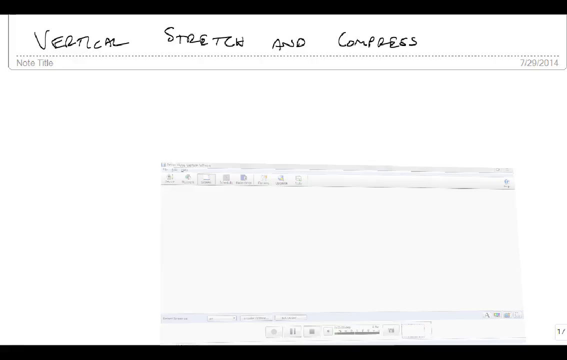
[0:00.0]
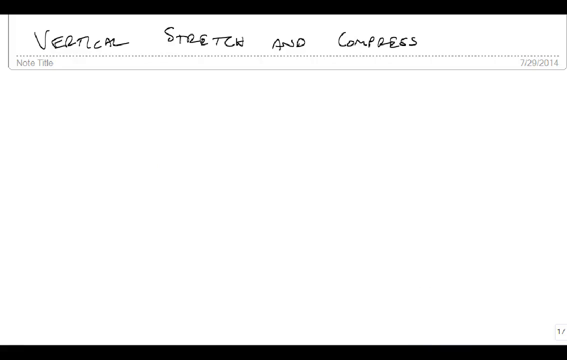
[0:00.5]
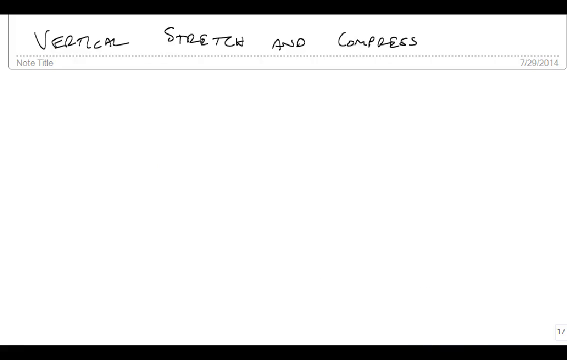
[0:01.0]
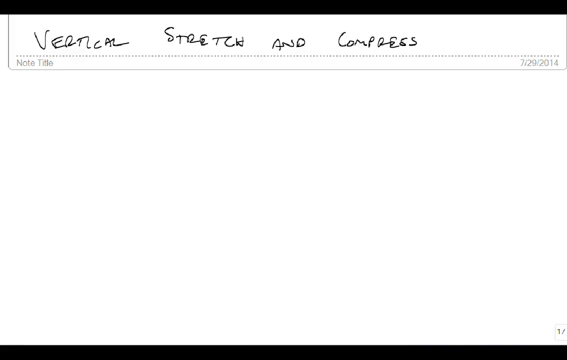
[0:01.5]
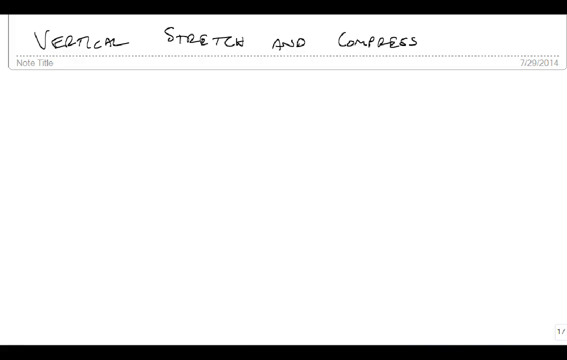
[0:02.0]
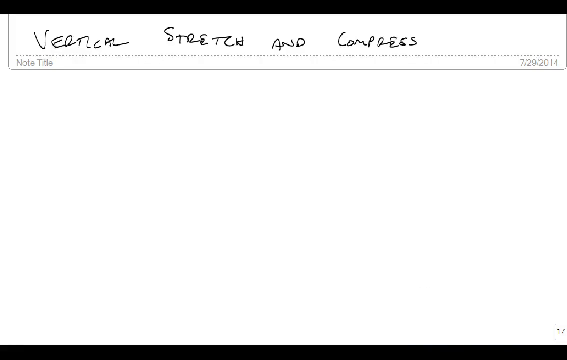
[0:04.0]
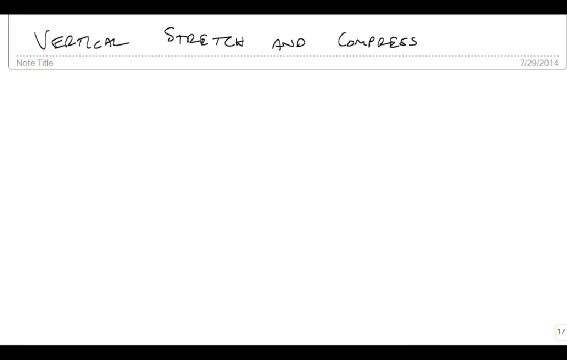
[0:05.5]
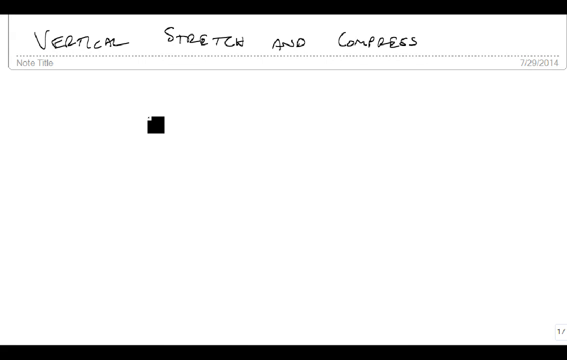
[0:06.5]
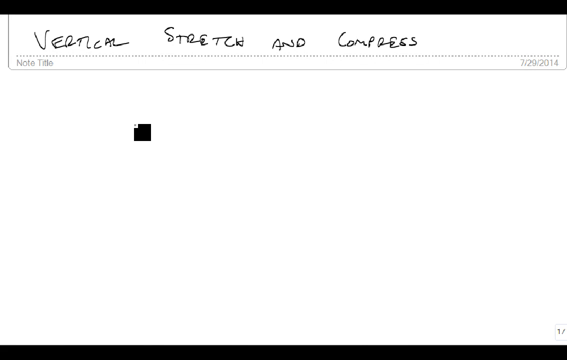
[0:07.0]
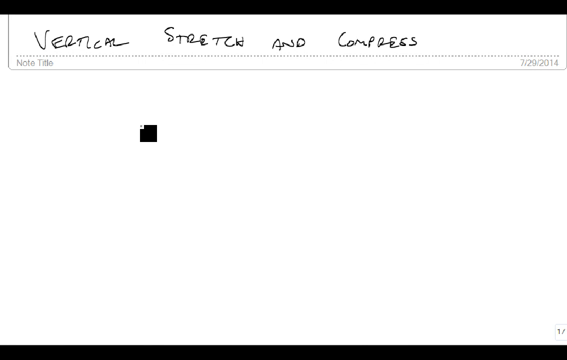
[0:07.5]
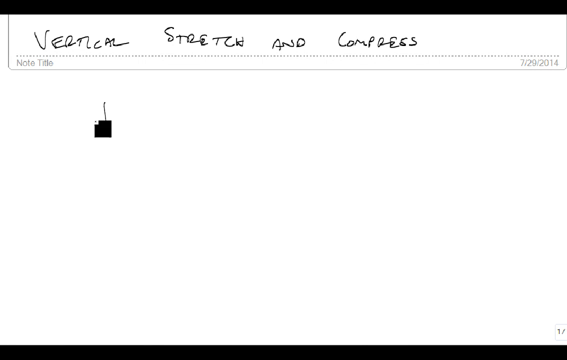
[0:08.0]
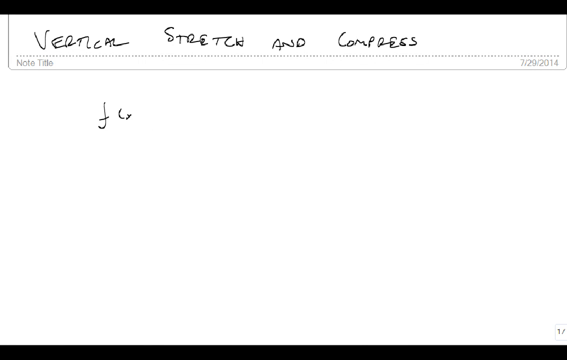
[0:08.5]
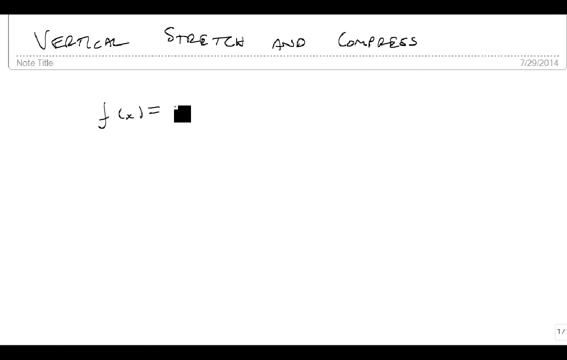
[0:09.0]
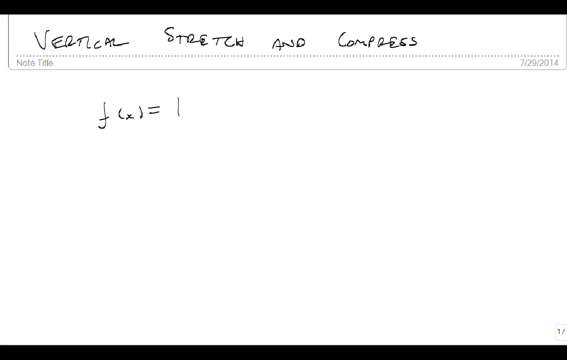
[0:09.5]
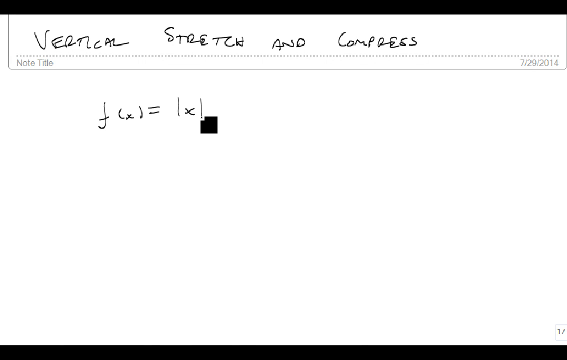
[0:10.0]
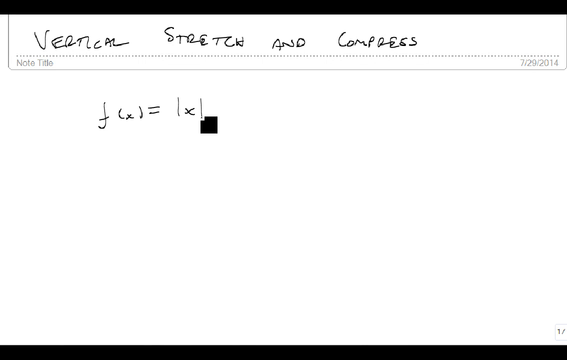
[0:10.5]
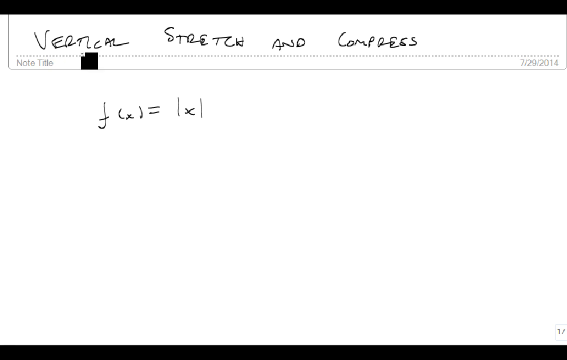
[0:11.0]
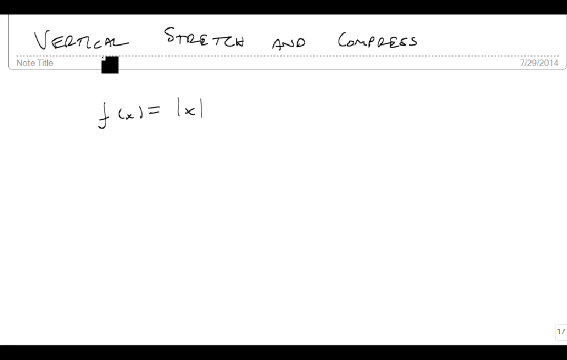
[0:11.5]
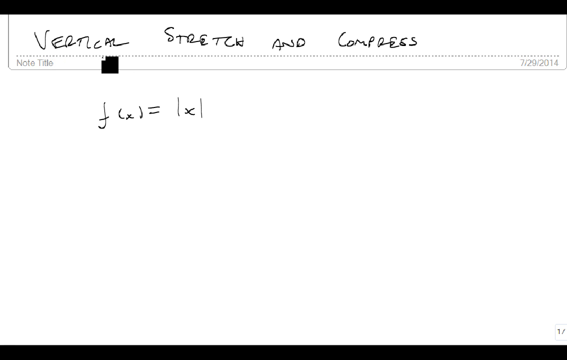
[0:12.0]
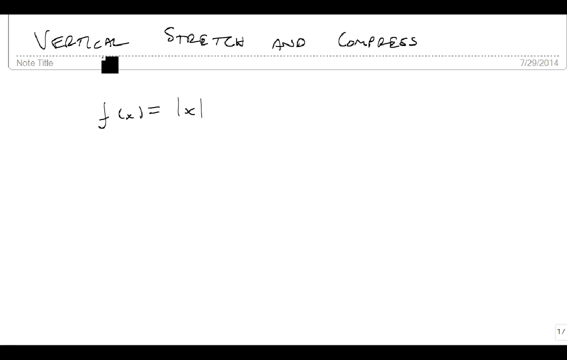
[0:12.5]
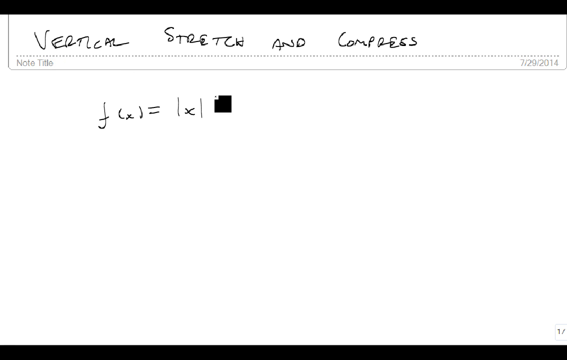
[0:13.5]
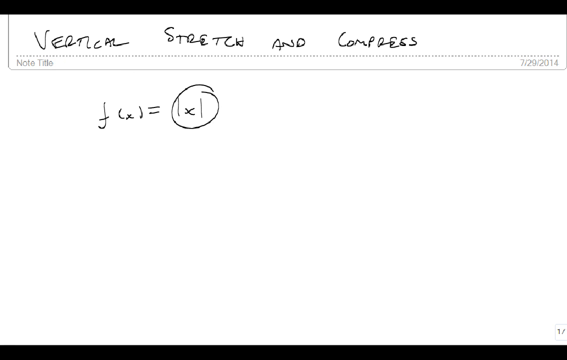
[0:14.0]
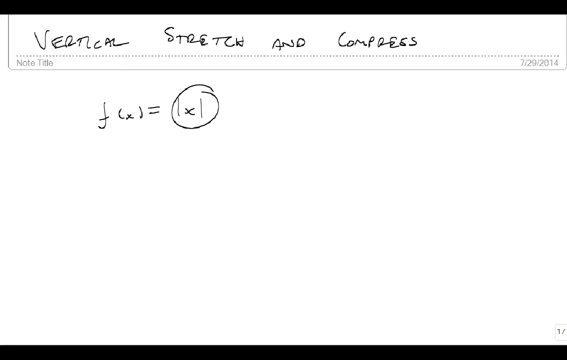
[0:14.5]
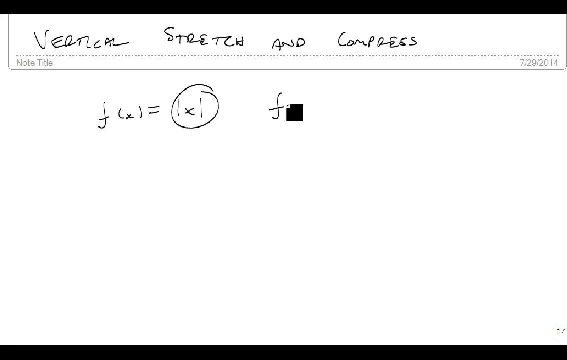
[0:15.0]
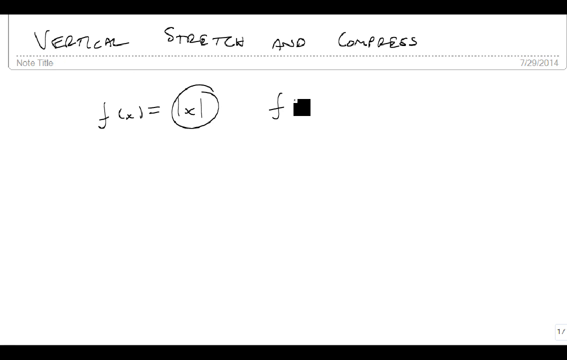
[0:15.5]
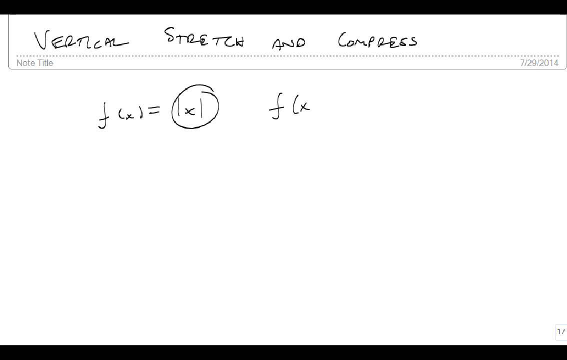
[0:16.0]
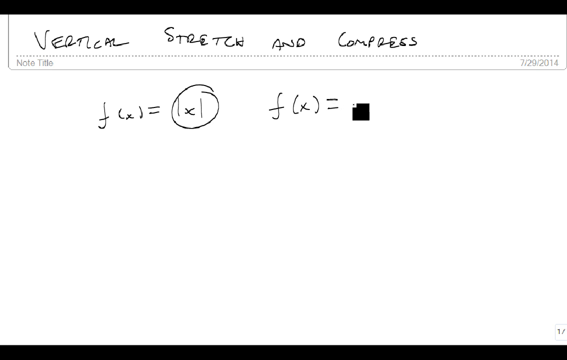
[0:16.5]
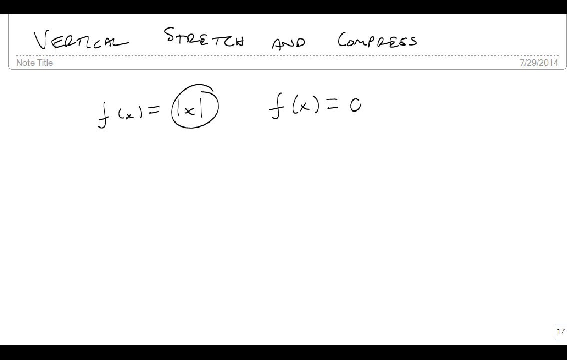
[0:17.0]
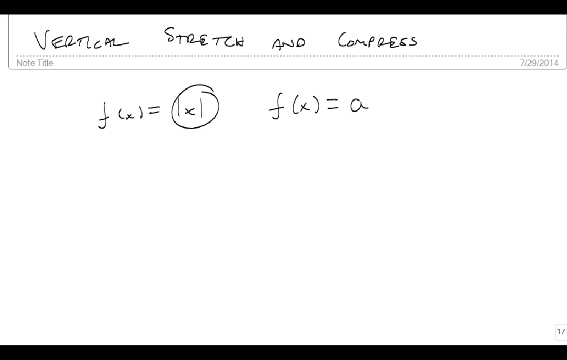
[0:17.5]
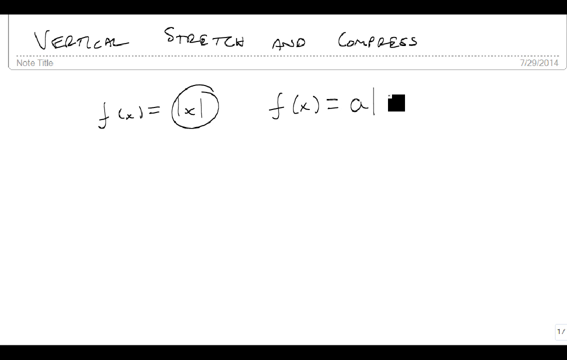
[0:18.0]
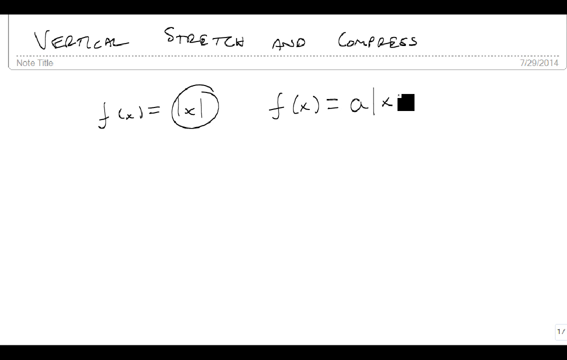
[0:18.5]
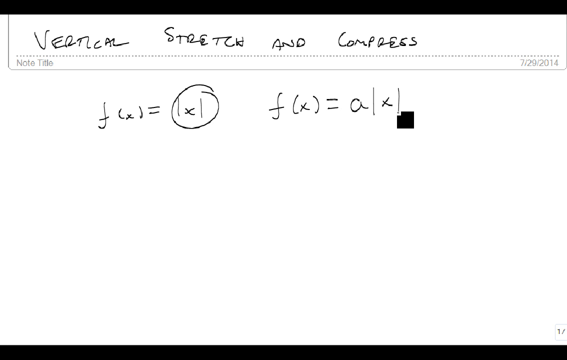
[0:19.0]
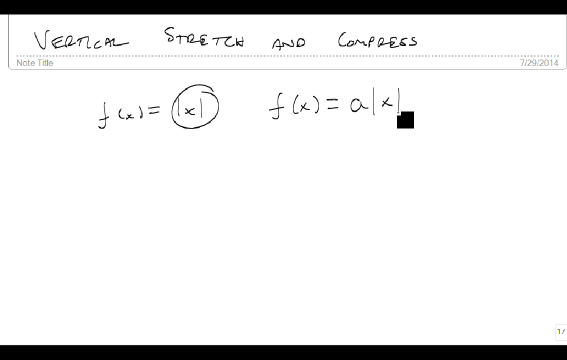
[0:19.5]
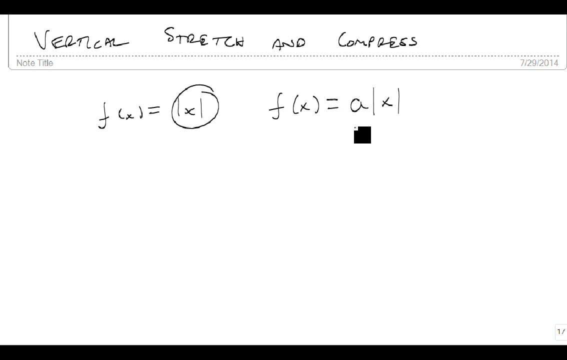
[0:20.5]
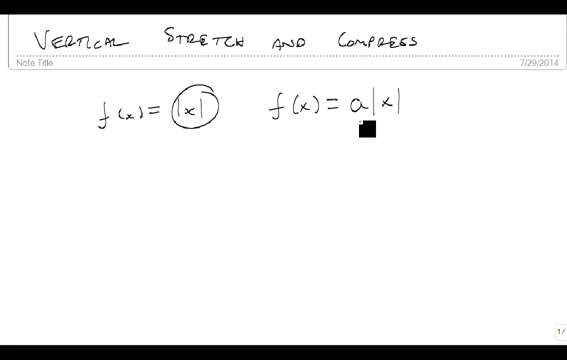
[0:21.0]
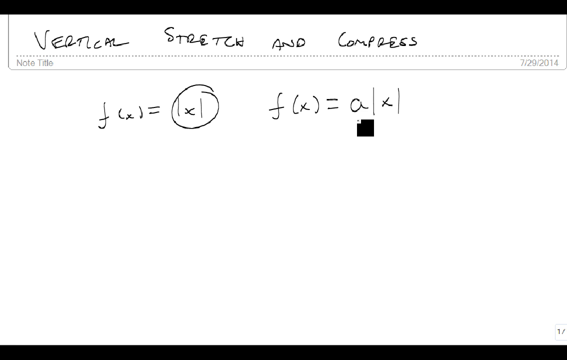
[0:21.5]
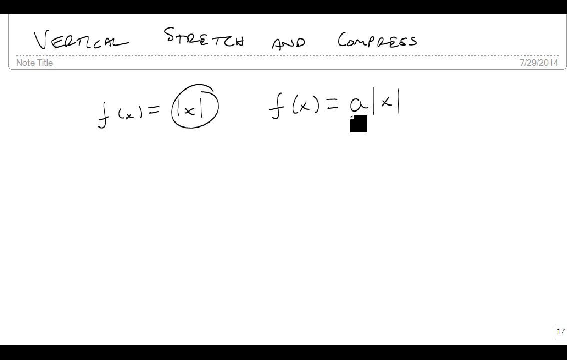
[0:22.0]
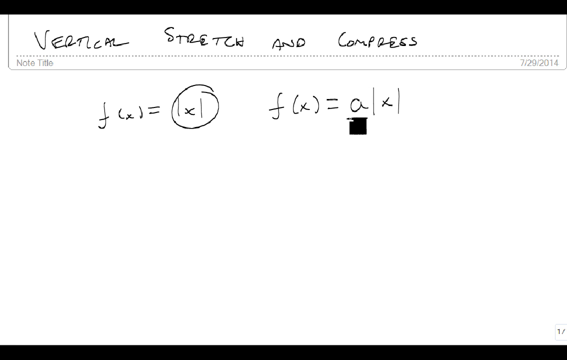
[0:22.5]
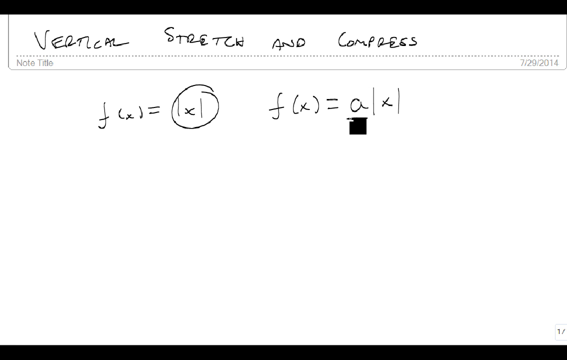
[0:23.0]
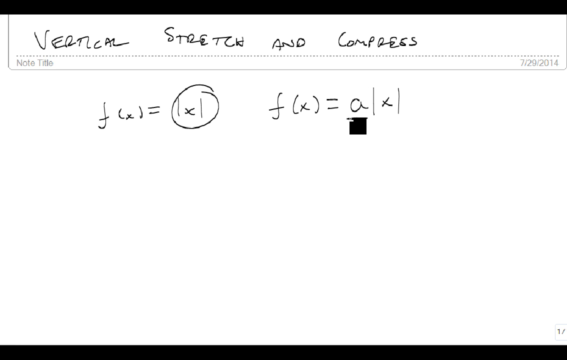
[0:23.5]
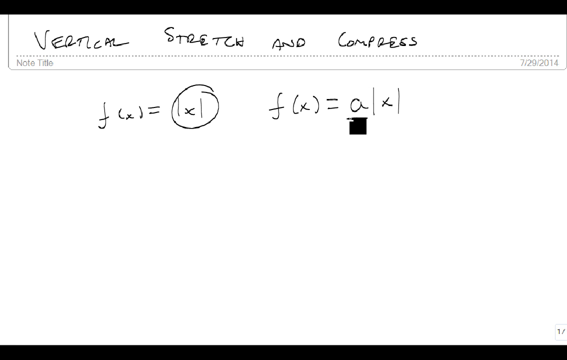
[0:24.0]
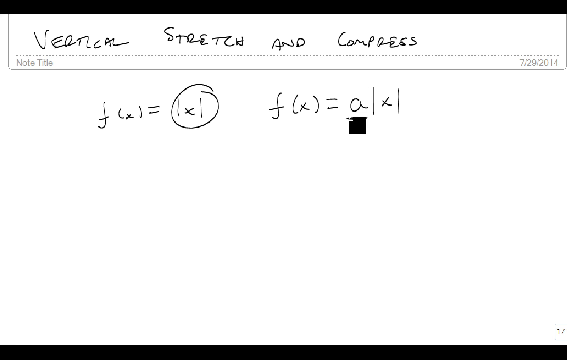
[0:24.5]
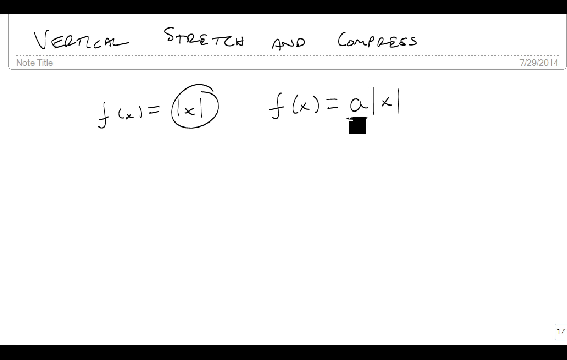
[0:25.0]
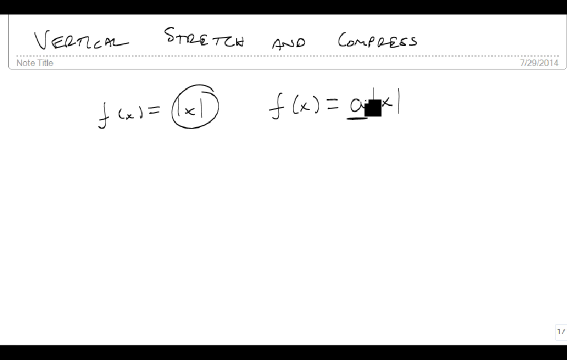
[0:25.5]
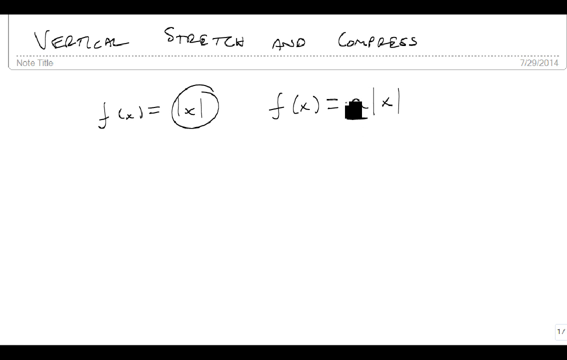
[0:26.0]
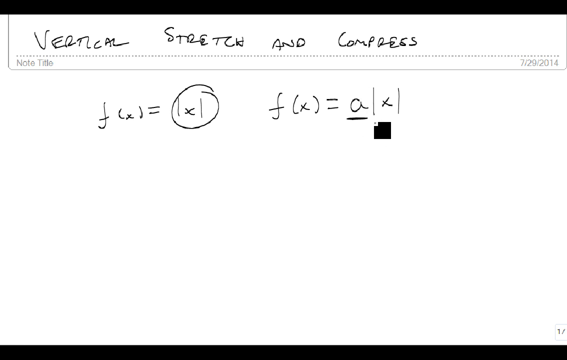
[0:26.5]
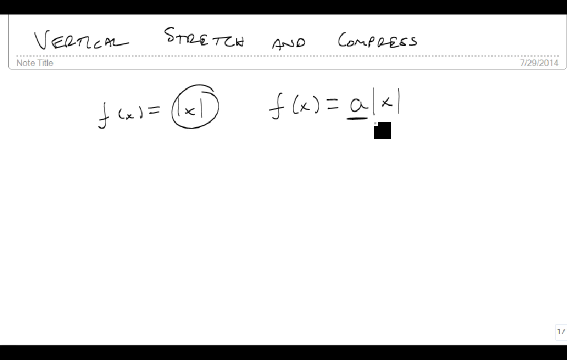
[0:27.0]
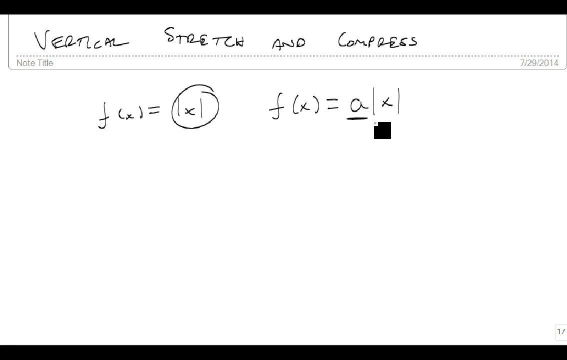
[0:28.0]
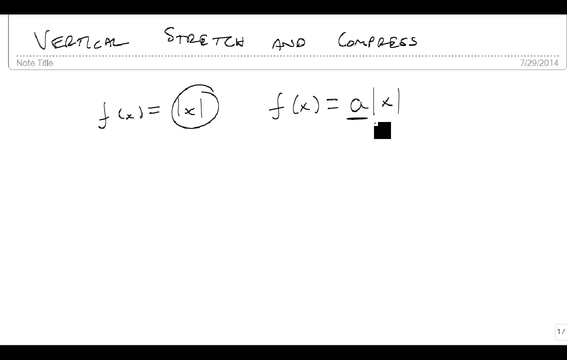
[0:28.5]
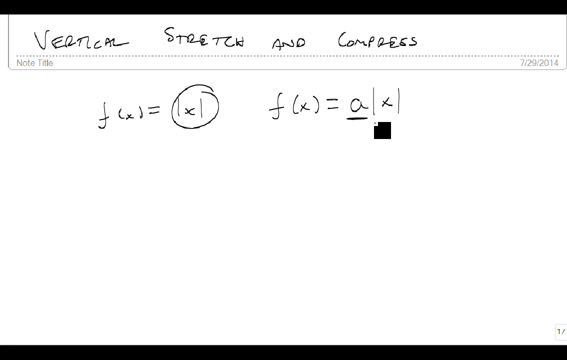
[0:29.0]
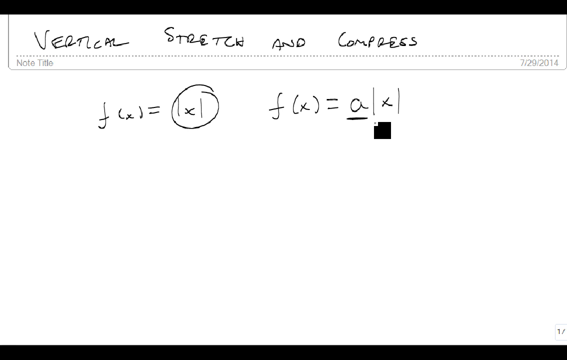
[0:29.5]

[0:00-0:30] A white screen shows black text reading "vertical stretch and compress," with some kind of note tip underneath it. An equation reading f(x) equals one times one appears, and a cursor writes out more educational-style equations in black text, including f(x) equals a times the absolute value of x. No humans or animals appear, and the setting does not change.